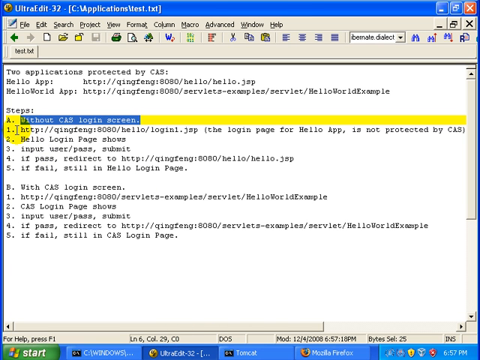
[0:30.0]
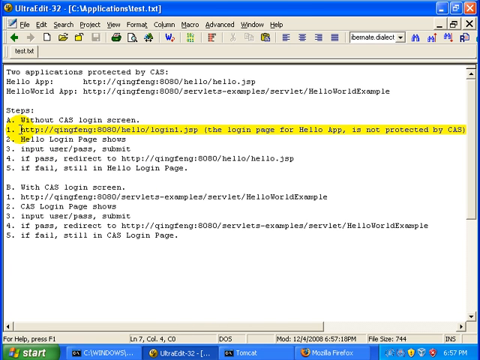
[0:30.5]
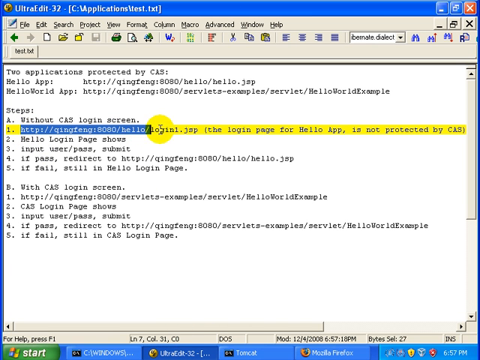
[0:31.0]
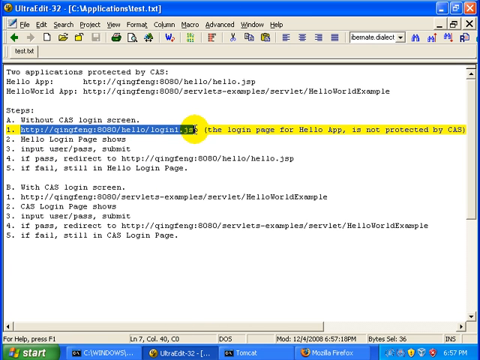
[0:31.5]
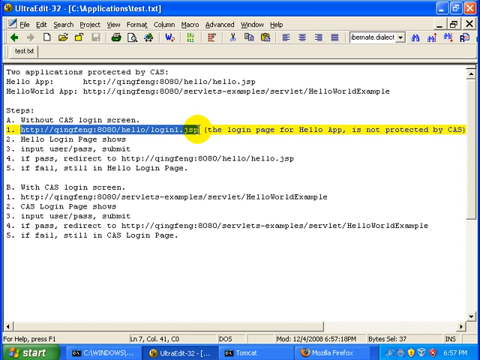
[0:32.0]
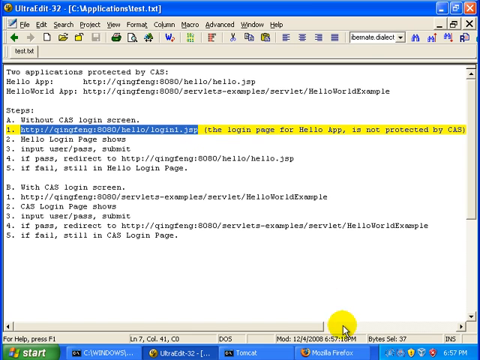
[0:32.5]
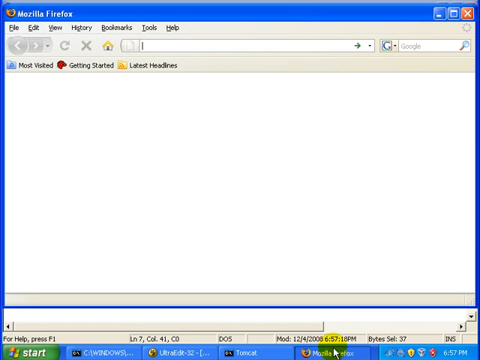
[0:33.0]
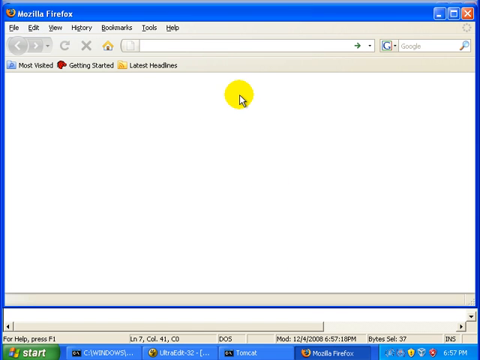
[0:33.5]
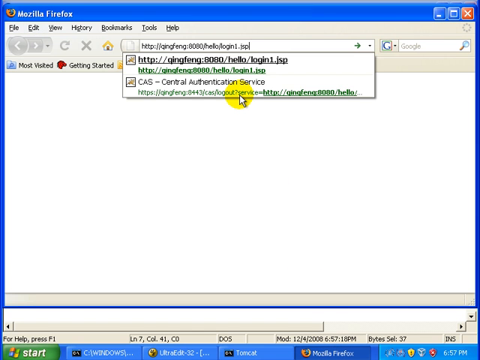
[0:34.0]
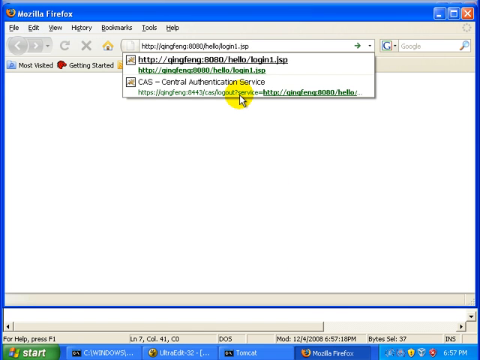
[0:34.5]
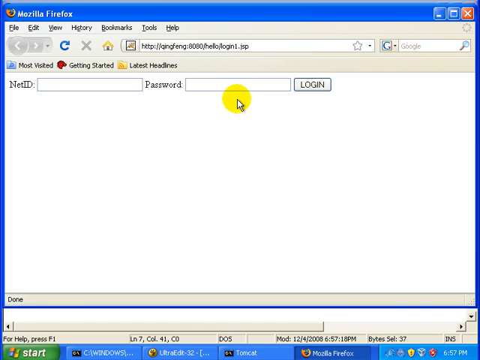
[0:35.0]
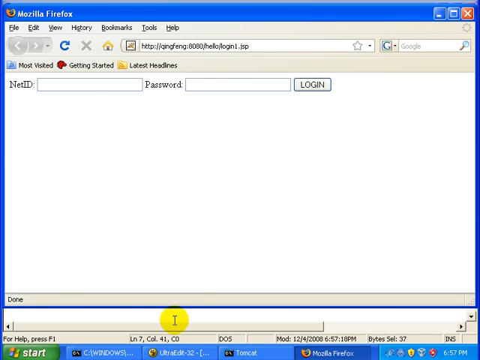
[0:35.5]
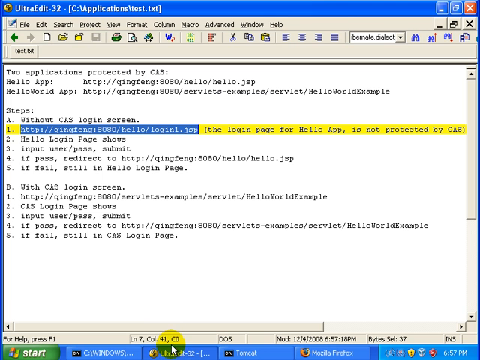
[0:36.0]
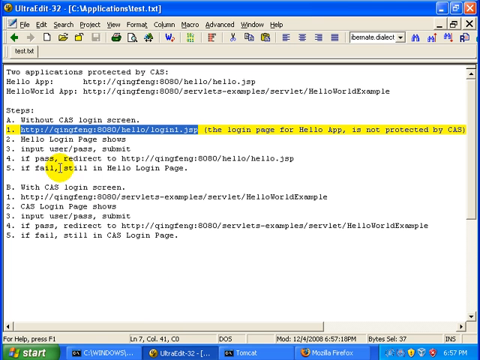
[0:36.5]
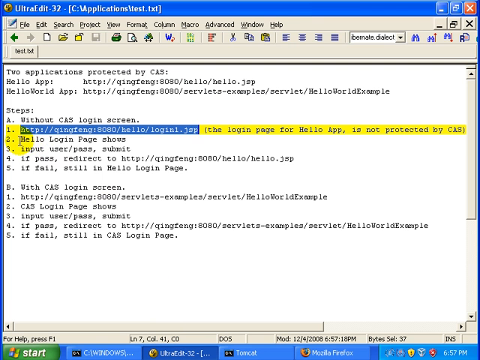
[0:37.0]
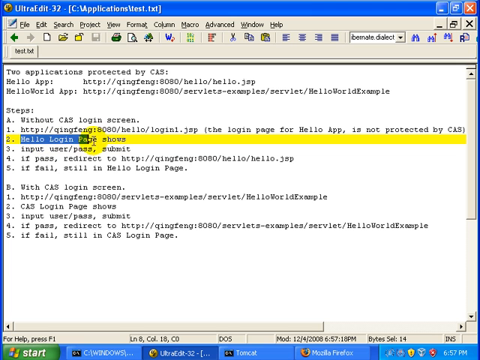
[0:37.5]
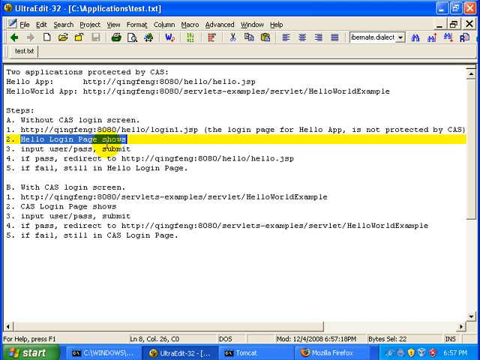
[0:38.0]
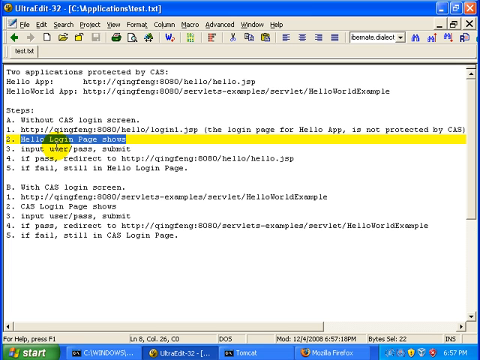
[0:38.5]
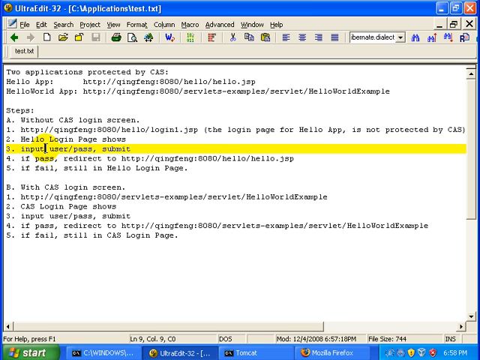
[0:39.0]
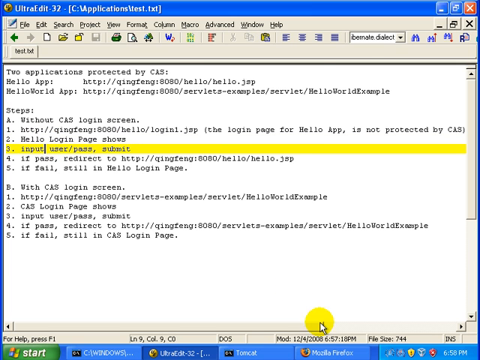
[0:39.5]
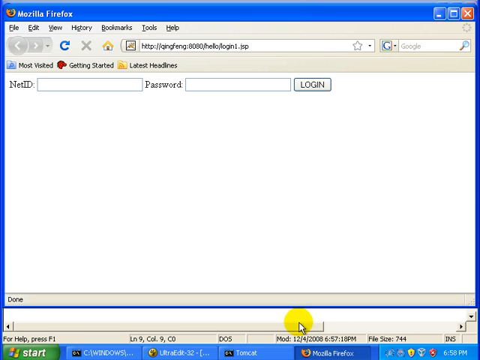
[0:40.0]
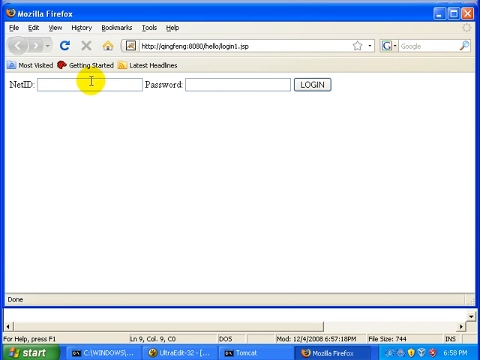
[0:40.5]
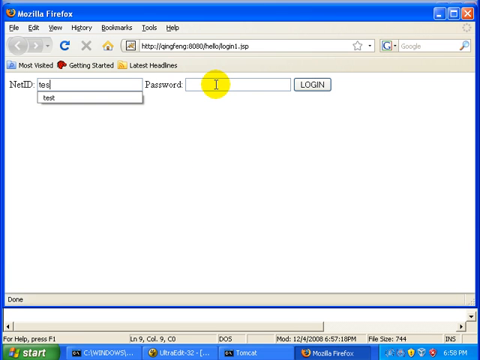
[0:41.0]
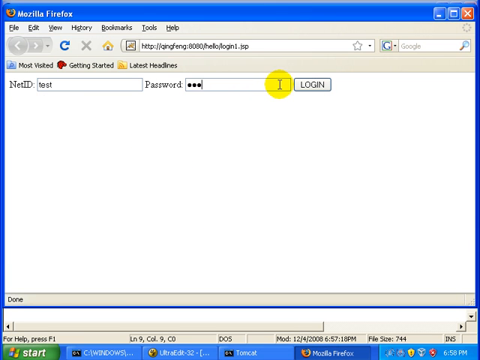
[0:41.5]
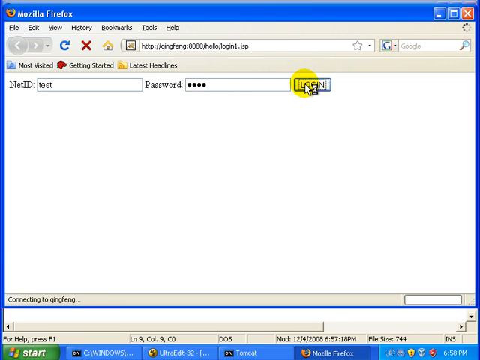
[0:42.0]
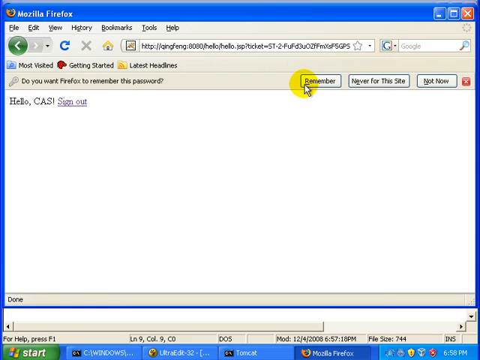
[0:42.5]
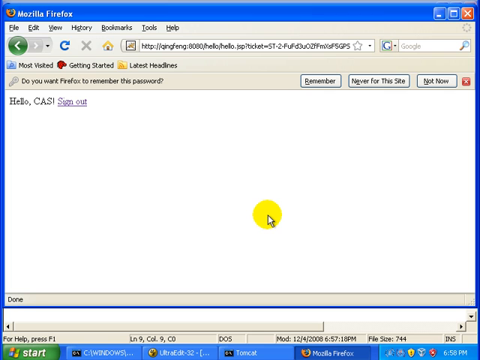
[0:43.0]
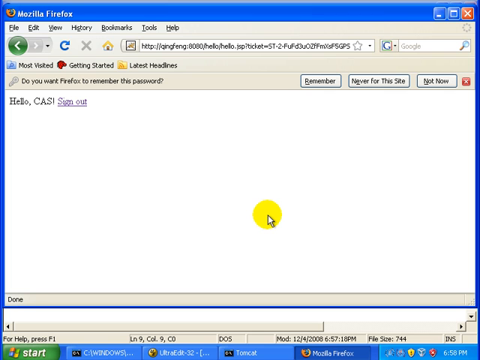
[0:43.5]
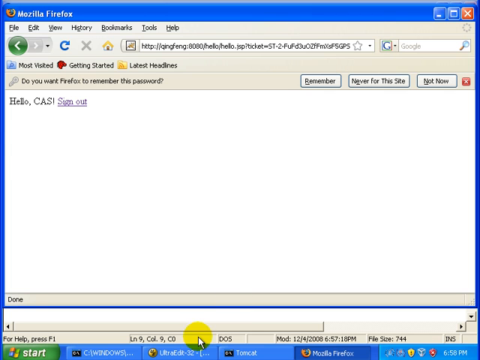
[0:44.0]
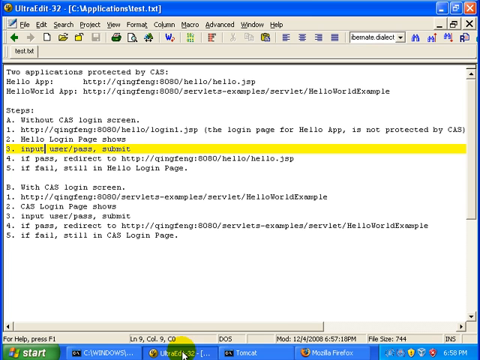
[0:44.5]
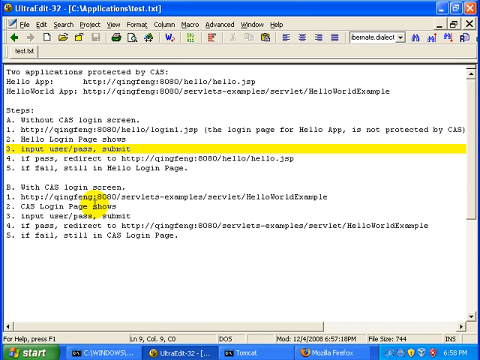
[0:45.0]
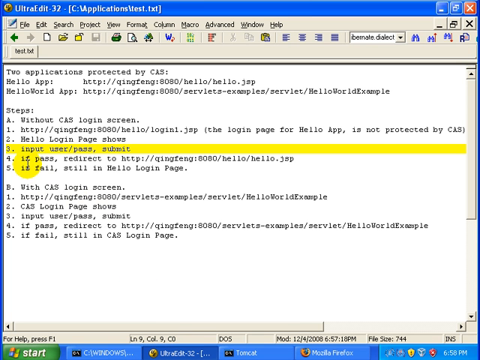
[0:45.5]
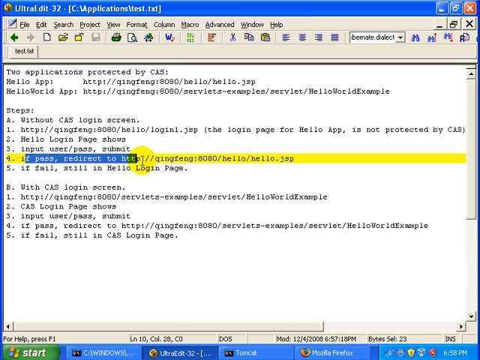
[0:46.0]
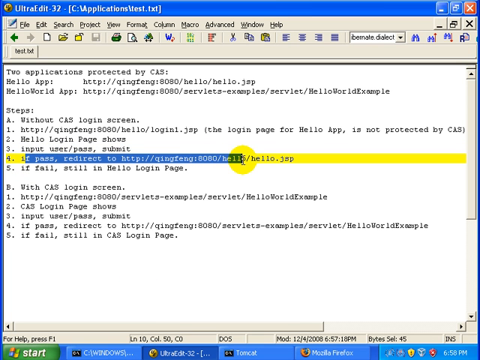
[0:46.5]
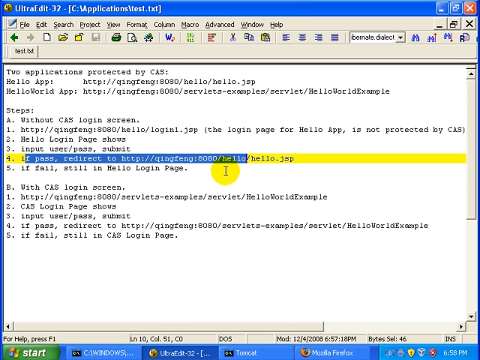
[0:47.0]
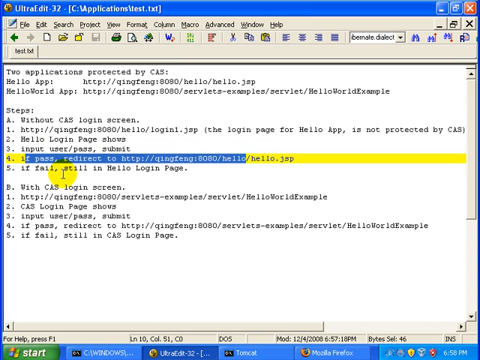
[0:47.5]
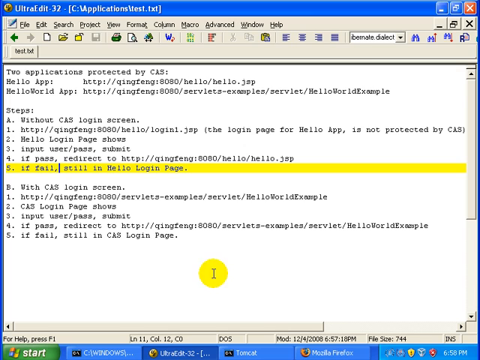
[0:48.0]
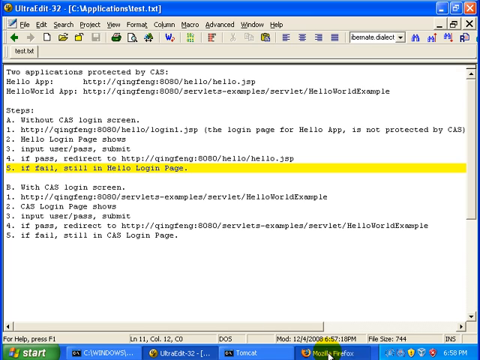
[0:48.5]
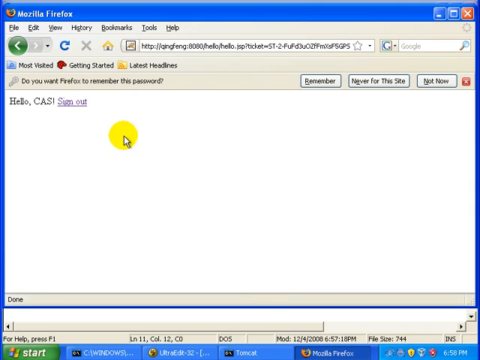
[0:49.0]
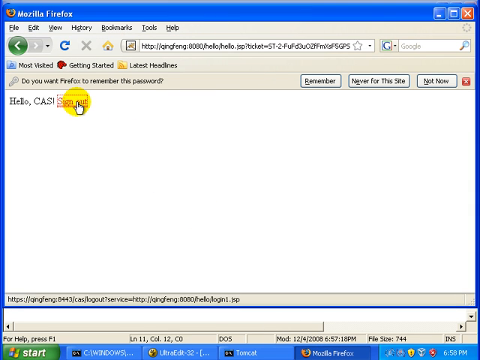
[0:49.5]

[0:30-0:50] The open text file shows step A1, the one with the QingFeng link, highlighted. The cursor copies the link and pastes it into the Firefox tab opened earlier. A drop-down appears from the search bar and the bottom option is clicked very quickly. Back in the UltraEdit file, the second step, "Hello login page shows," is highlighted, then the third step of A. On the Firefox page there are two blank text bars, the first labeled NetID and the second password. "test" is typed into NetID, and a four-letter password is entered that appears only as black circles. The website loads, and a prompt above it asks "do you want Firefox to remember this password?", which seems to be ignored. The website shows "Hello CAS" and a sign out link. UltraEdit is brought back with number three highlighted, then number four and number five are highlighted. Firefox is opened again and sign out is clicked.